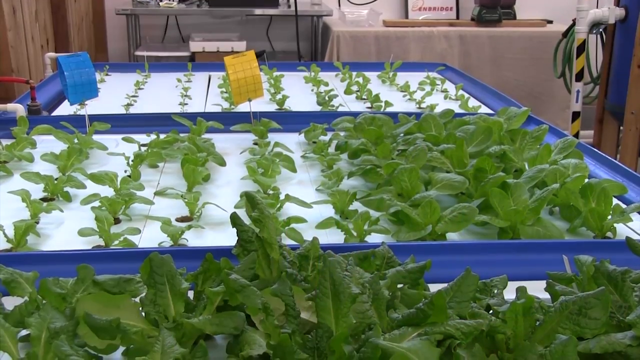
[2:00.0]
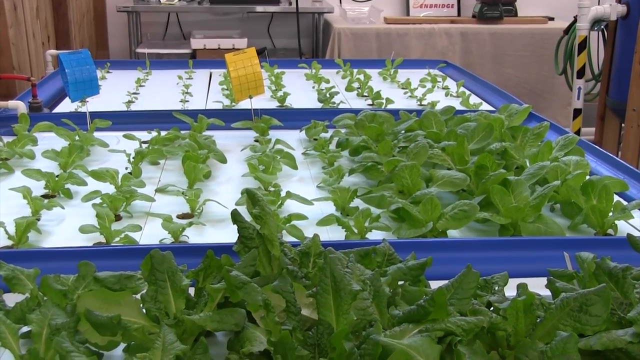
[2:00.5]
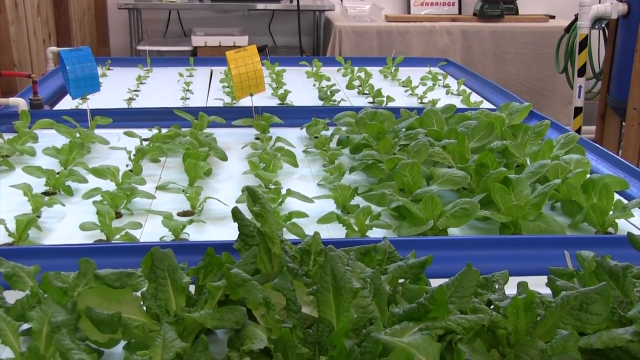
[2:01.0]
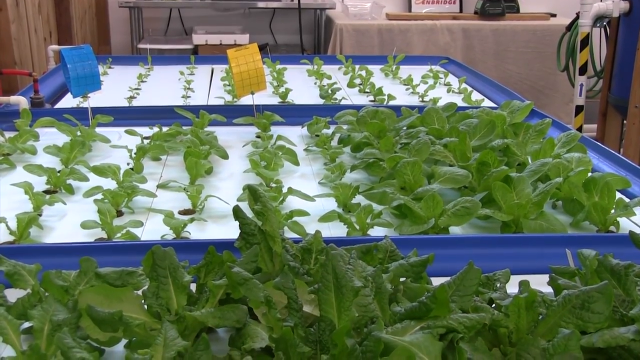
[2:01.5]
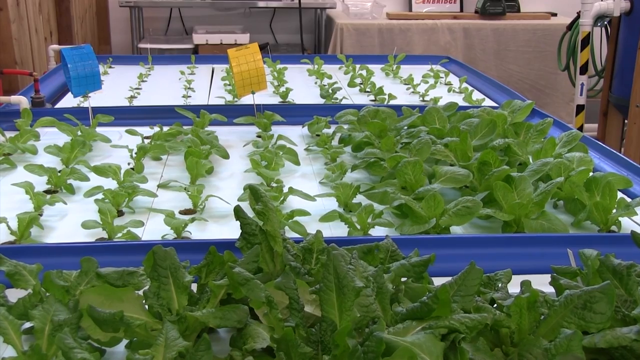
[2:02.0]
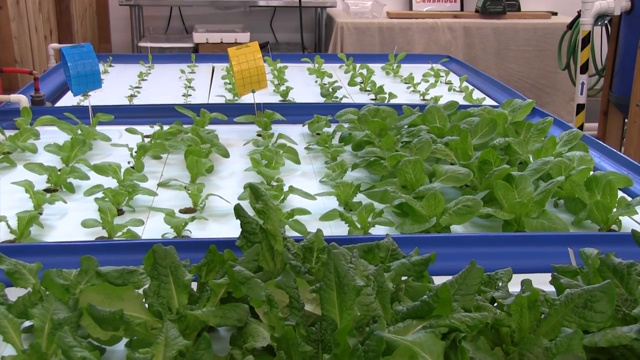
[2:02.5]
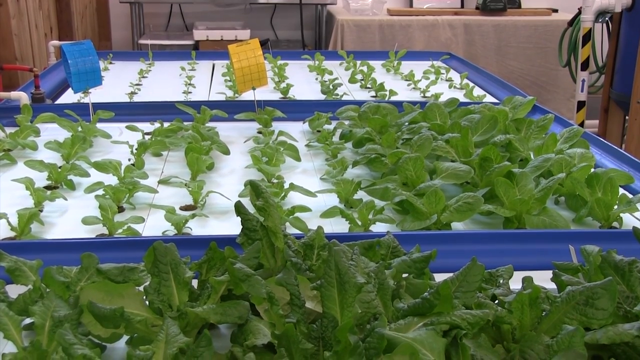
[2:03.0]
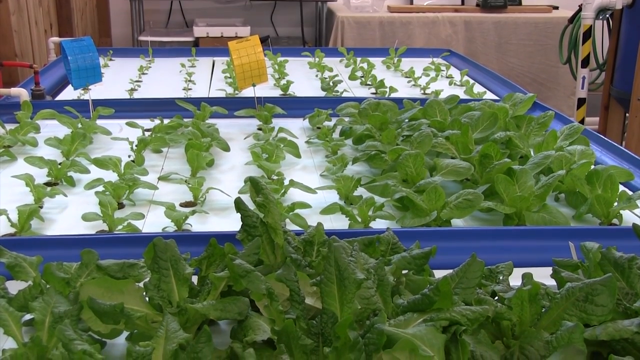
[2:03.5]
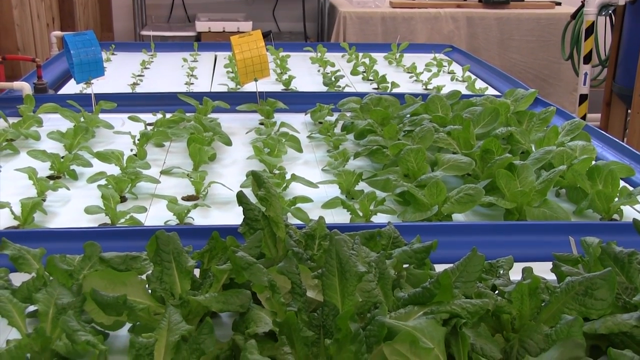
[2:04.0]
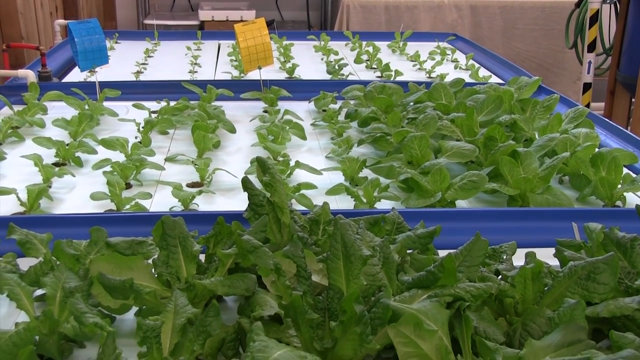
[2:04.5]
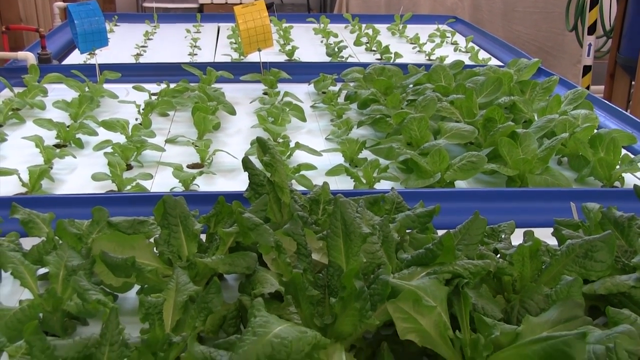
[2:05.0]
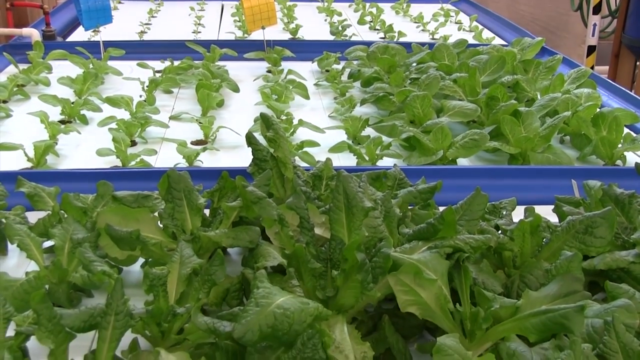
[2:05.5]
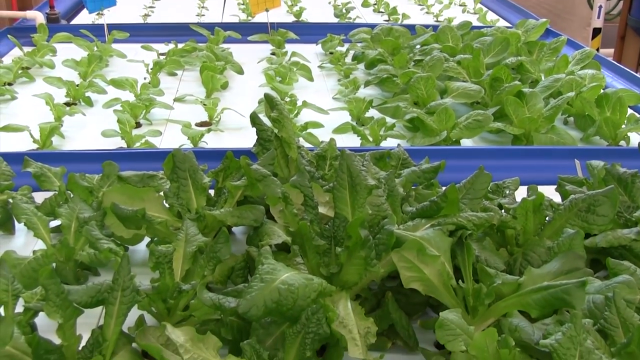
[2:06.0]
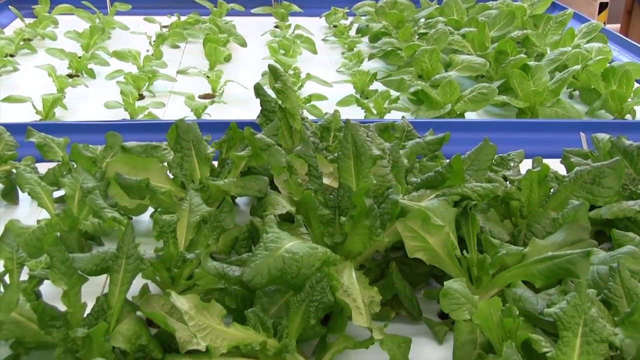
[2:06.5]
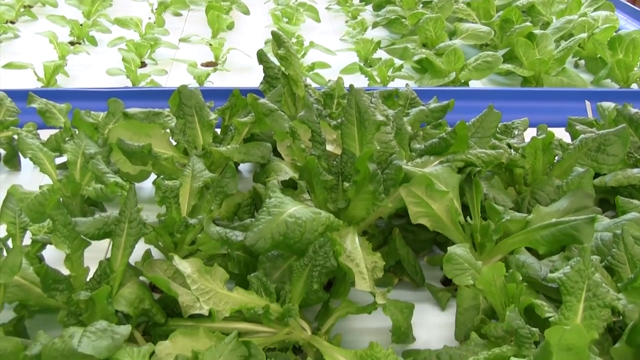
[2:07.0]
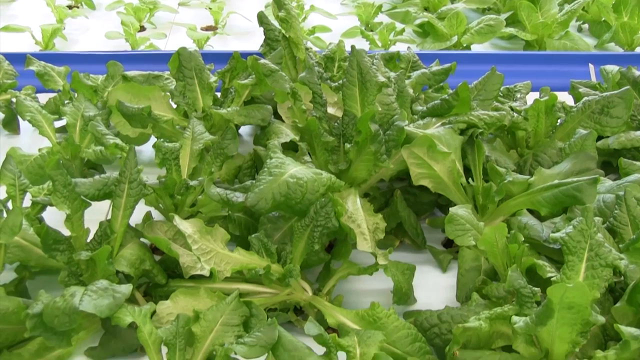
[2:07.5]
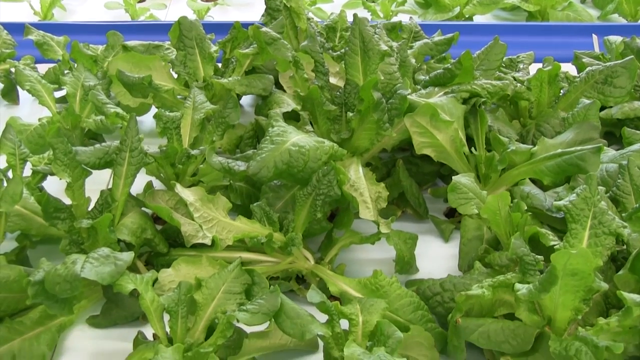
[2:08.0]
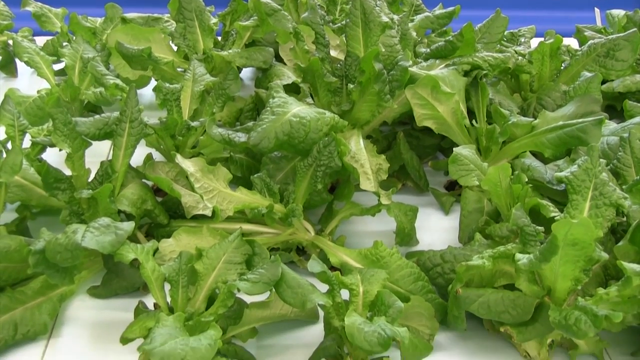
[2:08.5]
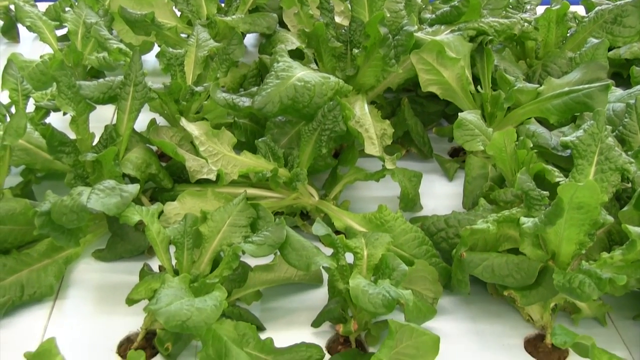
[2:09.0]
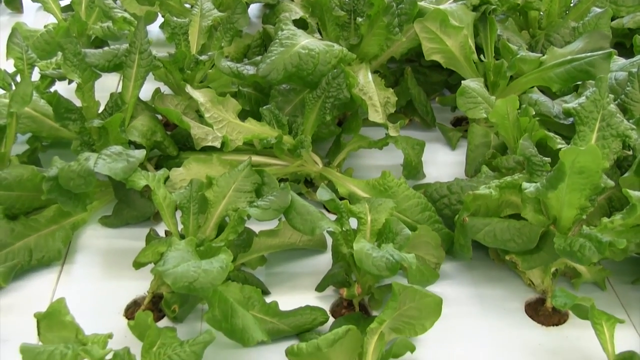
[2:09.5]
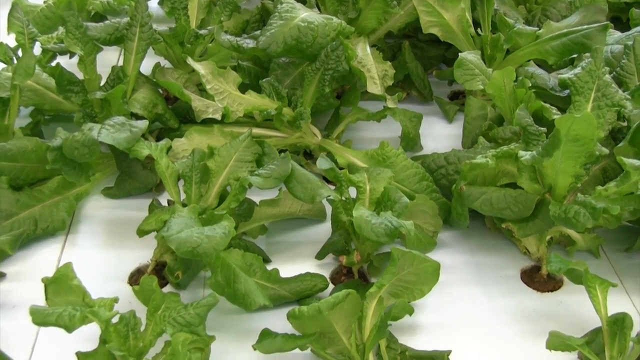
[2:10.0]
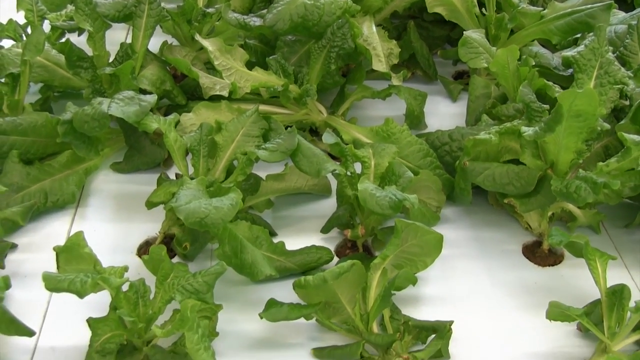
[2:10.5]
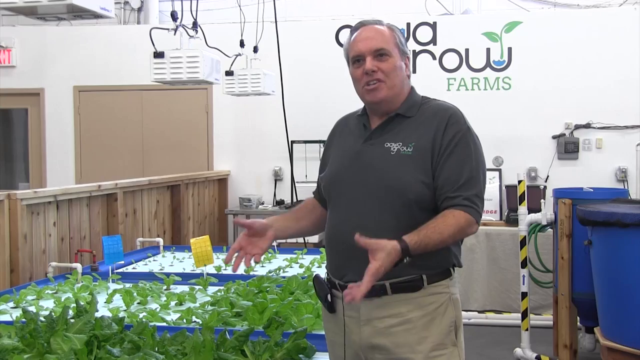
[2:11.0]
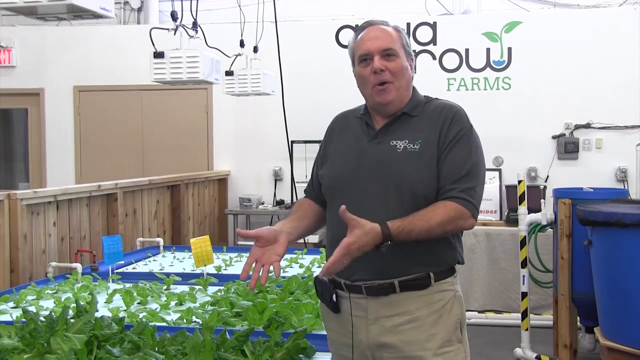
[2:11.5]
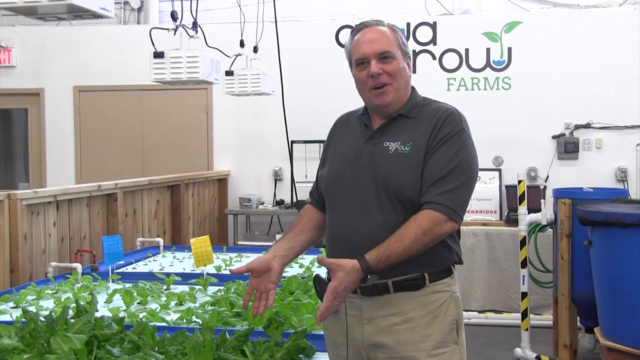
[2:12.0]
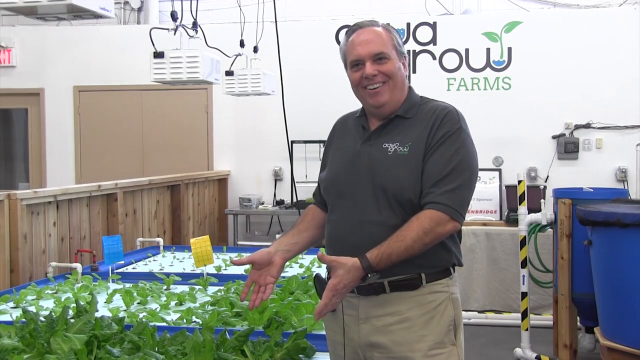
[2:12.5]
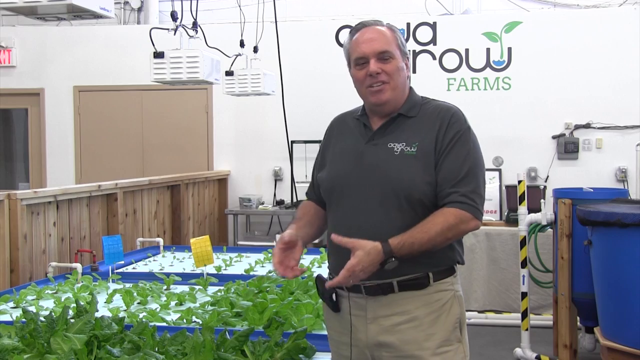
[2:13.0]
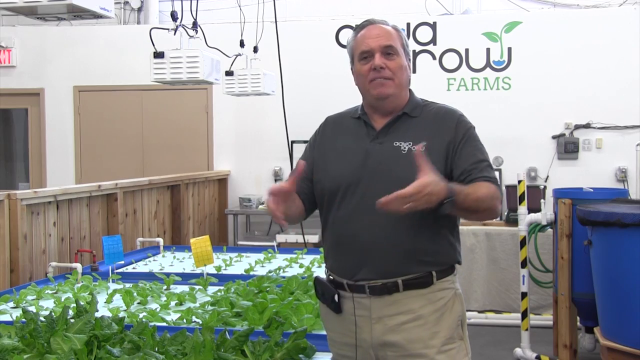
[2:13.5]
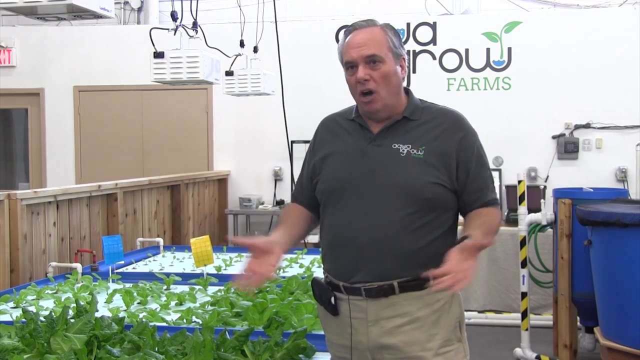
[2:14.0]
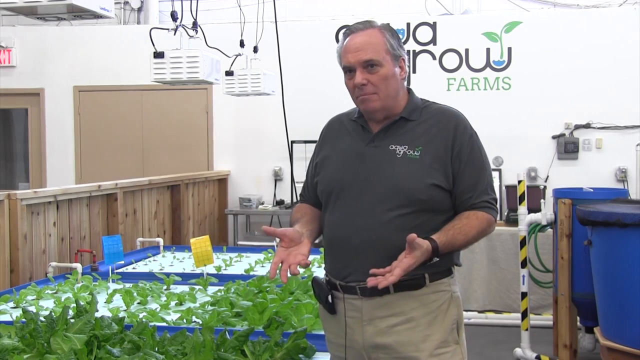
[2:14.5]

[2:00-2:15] Three flat blue trays hold white foam blocks with rows of circles, and green plants grow through each circle; they look like lettuce or possibly a mustard green, with big green leaves extending from a center point. The plants in front are the most mature and look about ready to harvest. The next tray has more mature plants on the right side and less mature ones on the left, and behind that is a tray of juvenile plants. The view moves down to show the roots extending through the foam, or possibly plastic, with something brown, possibly a plug of soil, holding each plant in place. Up close, the plants look more like a mustard green than a lettuce. An employee wears khaki pants, a gray Aqua Grow shirt, a black belt with a phone on its left side, and has a sharp salt-and-pepper haircut with a comb-over. On the wall behind him is a logo reading "Aqua Grow Farms", with a plant growing out of the W in "Farms", so it appears to be a hydroponics company. He smiles widely and gestures to the trays.